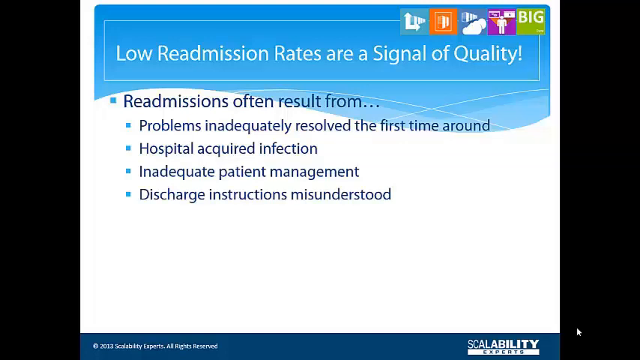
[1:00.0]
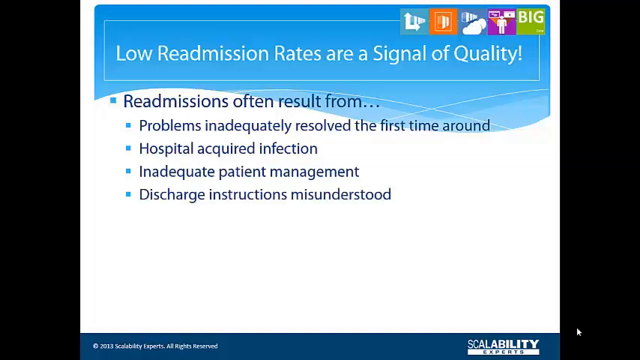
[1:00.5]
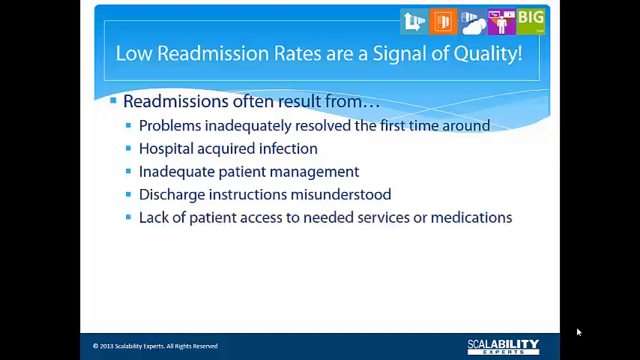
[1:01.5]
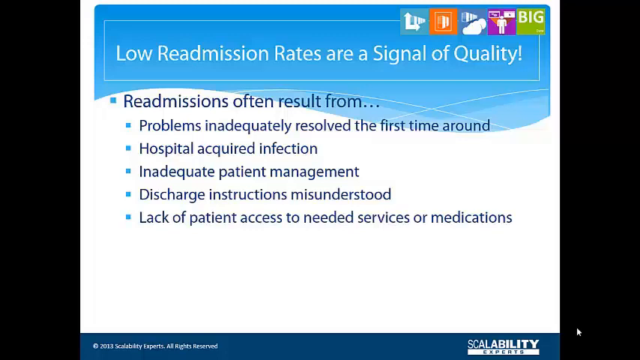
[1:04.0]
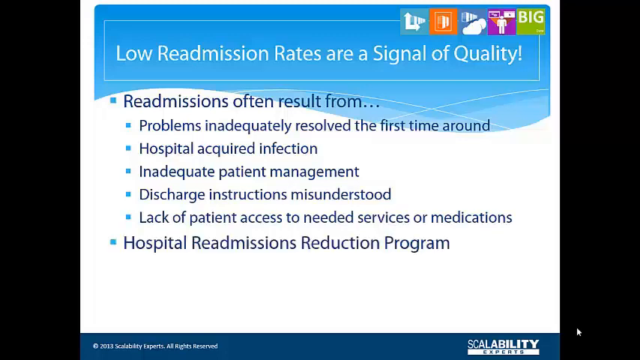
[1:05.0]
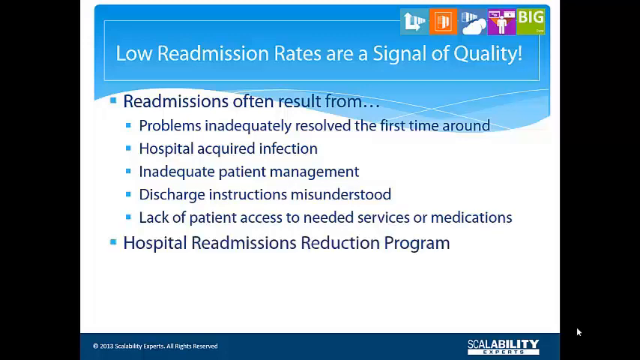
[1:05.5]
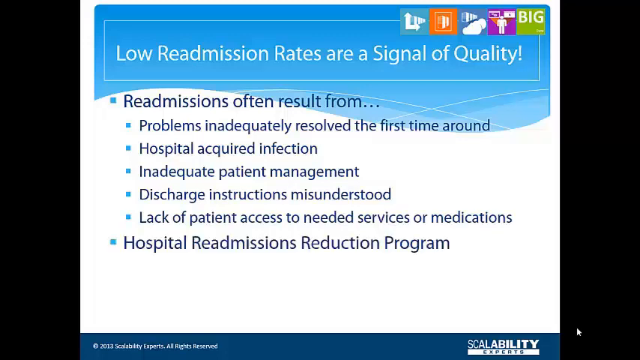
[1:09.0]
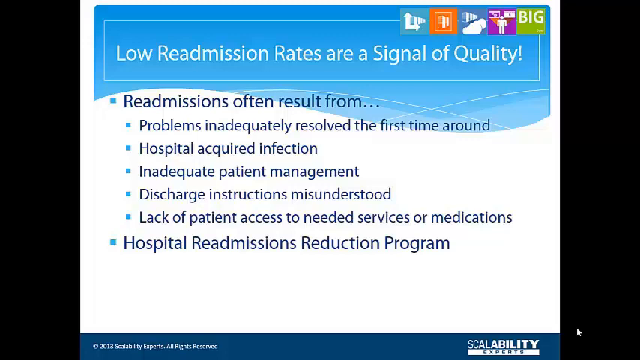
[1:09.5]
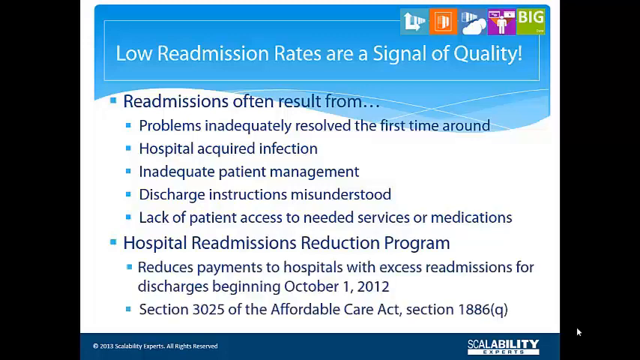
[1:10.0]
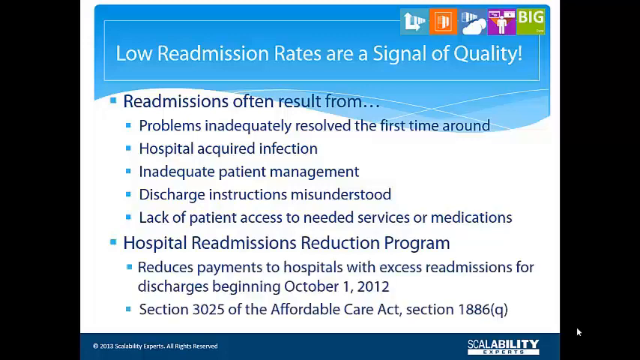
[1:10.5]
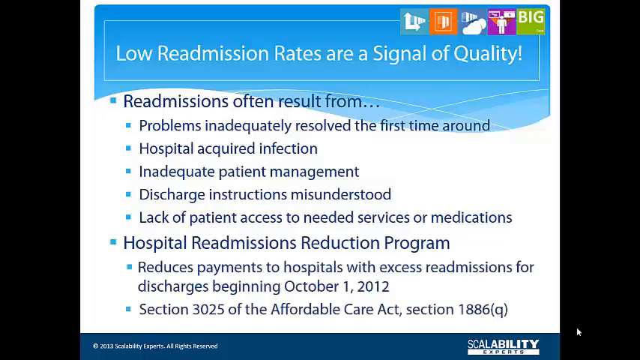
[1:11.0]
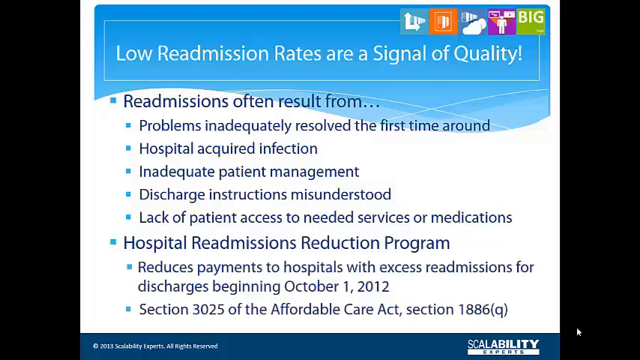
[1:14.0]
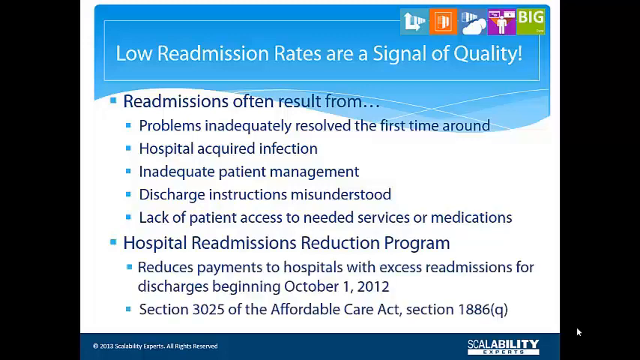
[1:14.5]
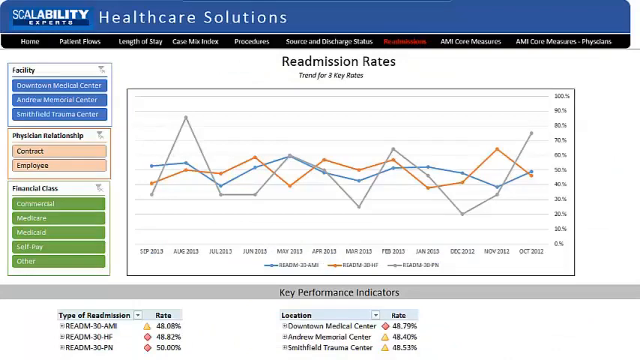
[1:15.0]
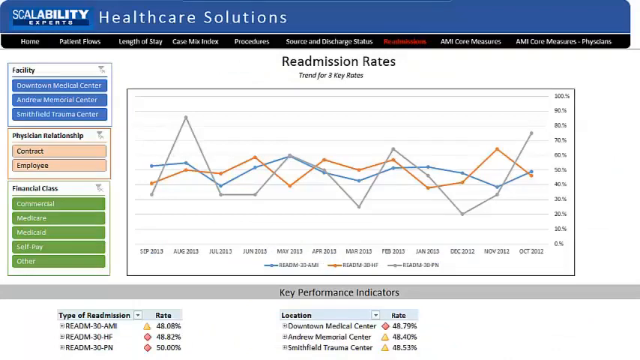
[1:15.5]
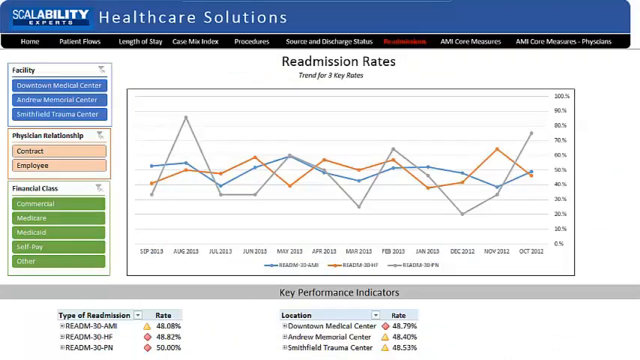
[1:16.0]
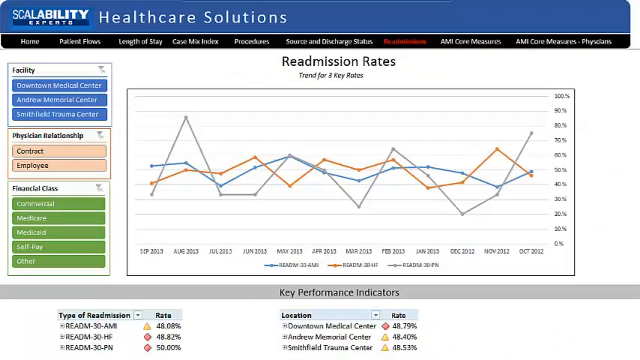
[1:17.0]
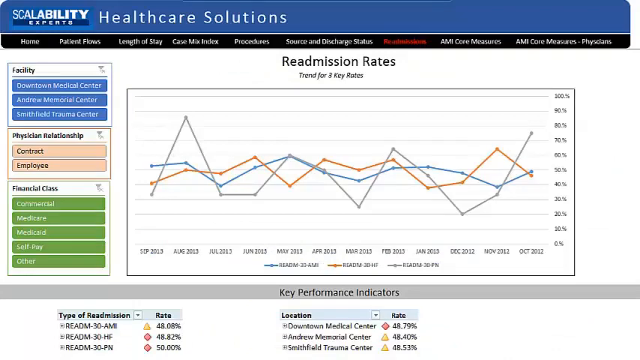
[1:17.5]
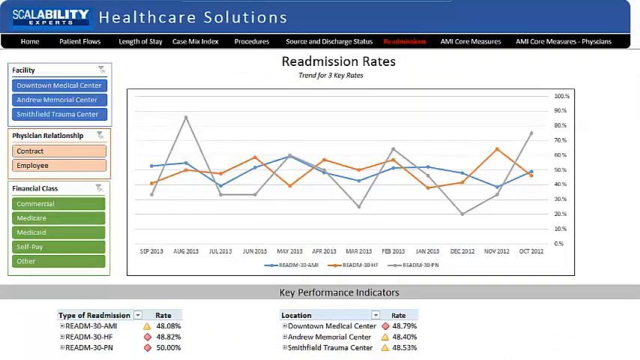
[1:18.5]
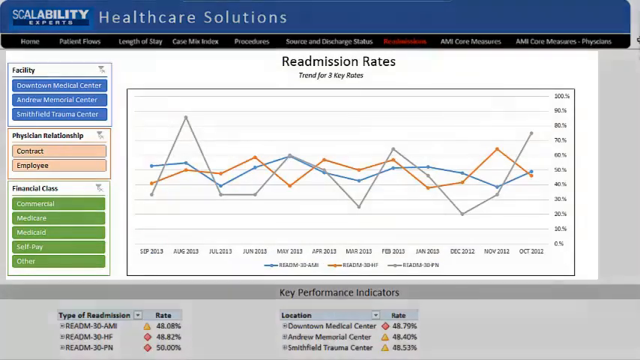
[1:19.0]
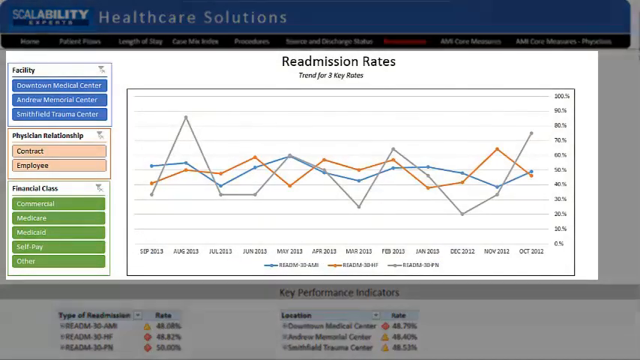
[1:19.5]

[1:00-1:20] A white background has a blue banner at the top reading, in white text, "low readmission rates are a signal of quality," with icons at the top. Blue bulleted text, with sub-bullets, reads "readmissions often result from... problems inadequately resolved the first time around, hospital acquired infection, inadequate patient management, and discharge instructions misunderstood." More text pops up: "lack of patient access to needed services or medications," "hospital readmissions reduction program," "reduces payments to hospitals with excess readmissions for discharges beginning October 1, 2012," "Section 3025 of the Affordable Care Act, Section 1886Q." The screen then transitions to another showing "scalability experts healthcare solutions." There is a graph titled "readmission rates, trend for three key rates," in gray, blue, and orange, with many dates ranging from September 2011 to October 2012. Key performance indicators for location and type of readmission are shown, along with settings on the side for faculty, physician relationship, and financial class. The view then seems to focus on some of the information in the readmission rates section.